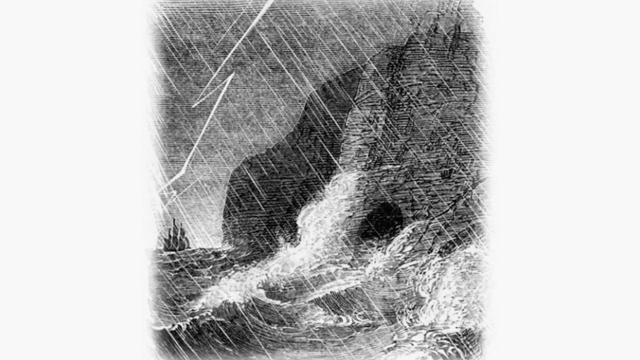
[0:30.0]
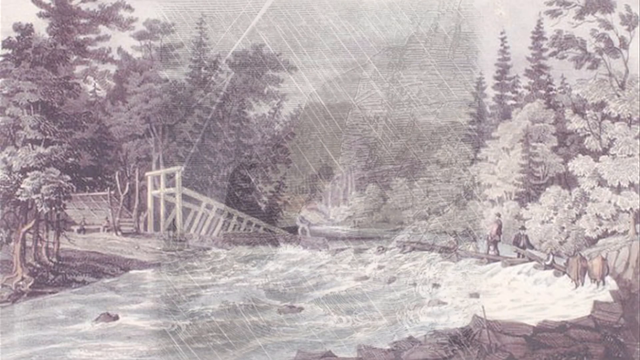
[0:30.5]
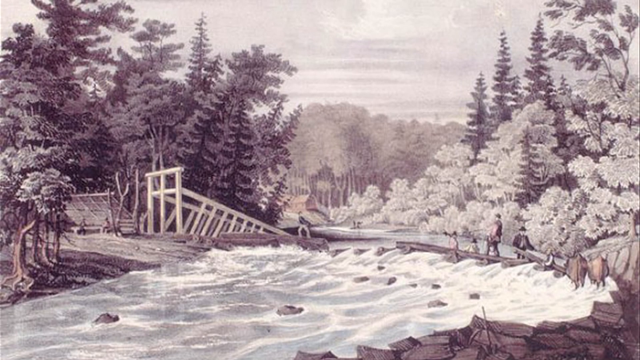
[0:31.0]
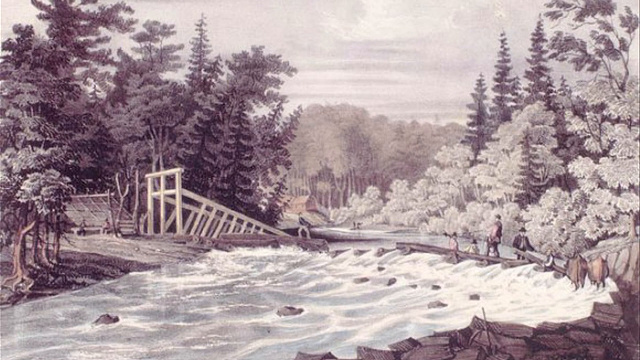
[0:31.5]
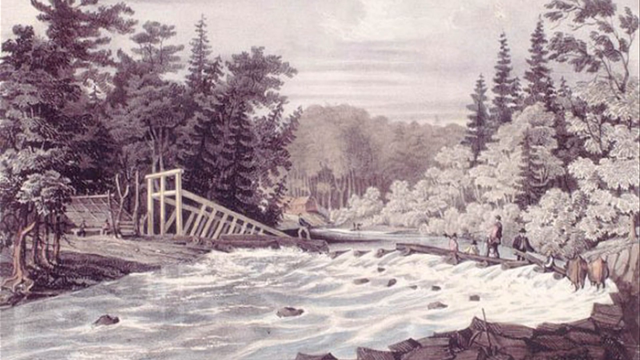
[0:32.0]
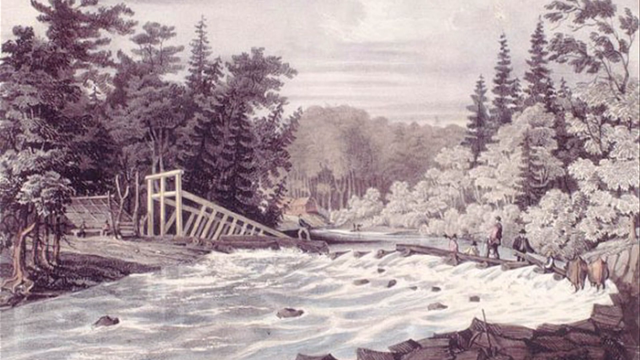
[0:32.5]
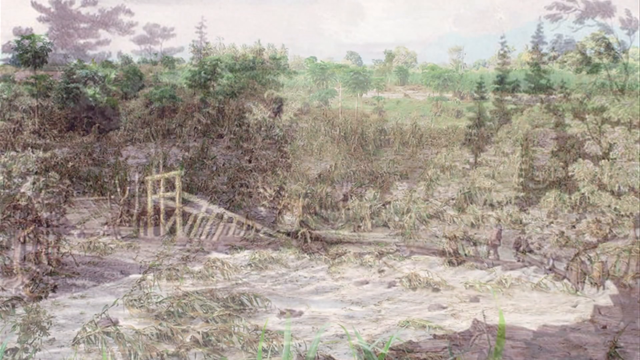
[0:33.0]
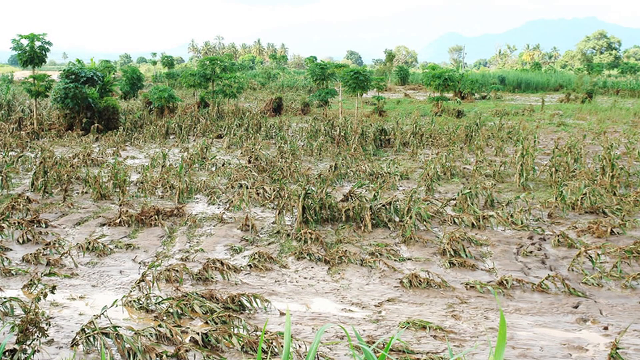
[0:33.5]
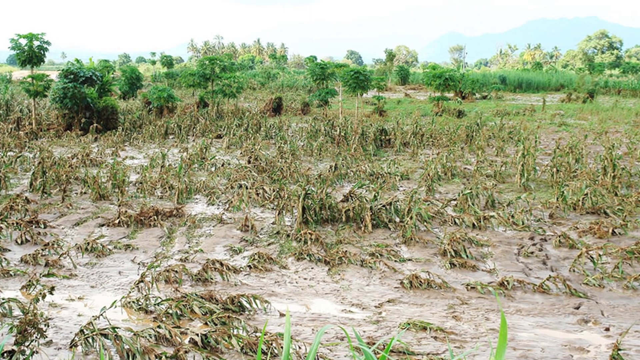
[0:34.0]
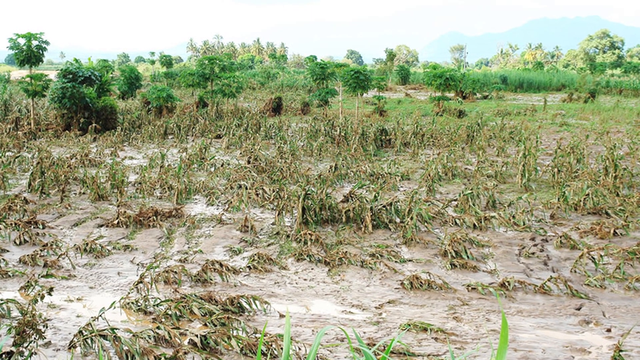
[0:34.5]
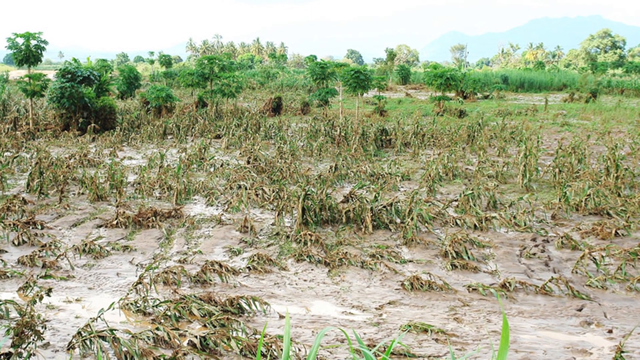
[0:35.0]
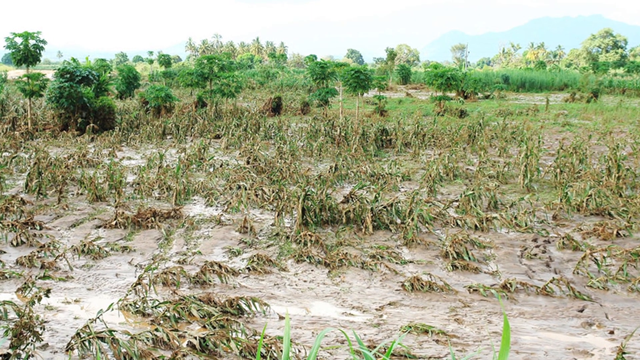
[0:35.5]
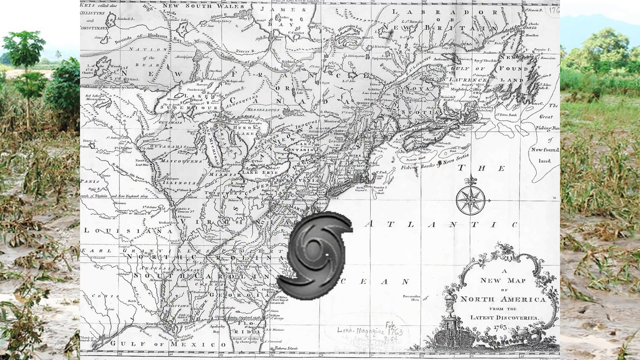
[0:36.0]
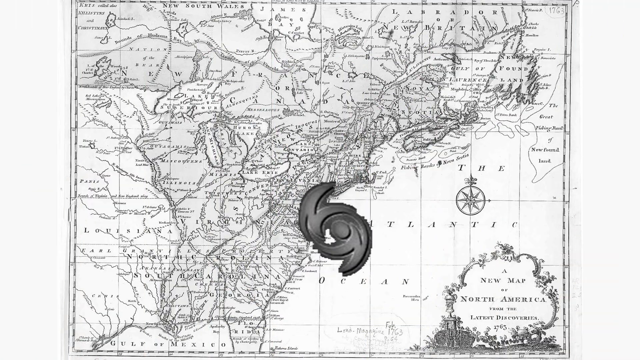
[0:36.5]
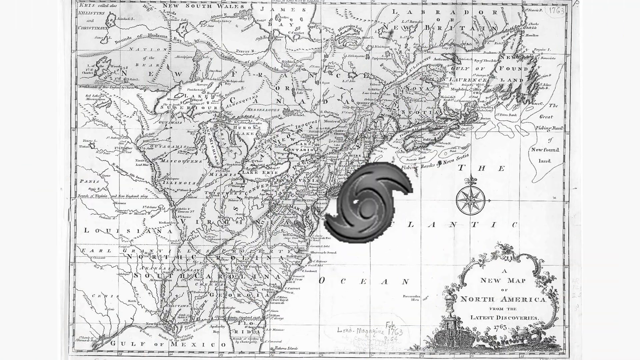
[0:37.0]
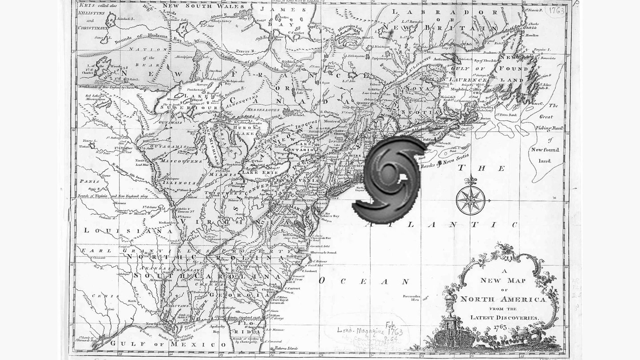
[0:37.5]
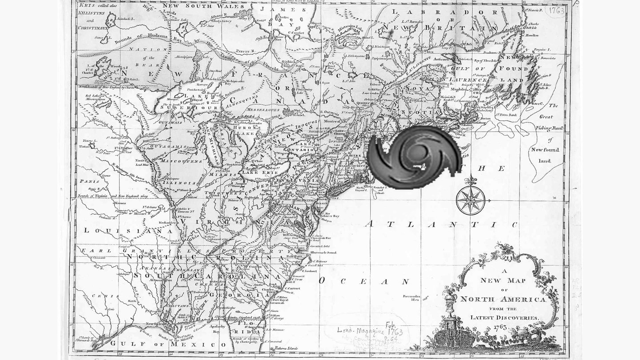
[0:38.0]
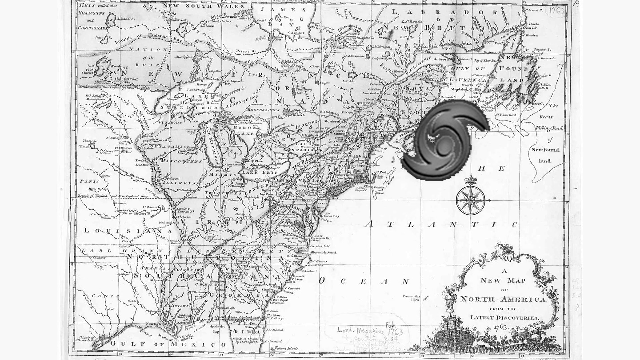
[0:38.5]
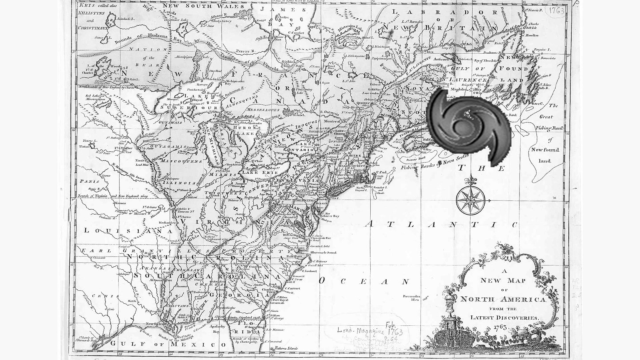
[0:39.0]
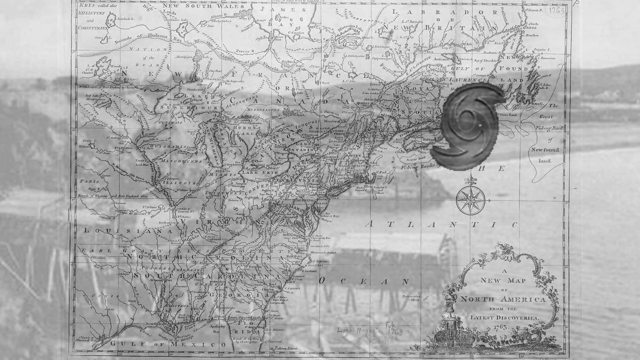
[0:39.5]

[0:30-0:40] The drawing of cliffs being crashed by waves shows a cave. The video then flashes very quickly to another painted scene of apparent devastation, looking like something has been flooded, almost like a rice paddy, with a lot of leaves scattered about; in the background there seem to be whole trees, very green. A mountain is visible very far off in the right background, though the lighting is almost washed out at the back. The video then zooms to a map labeled as the new map of North America, a very old map of the Atlantic, on which a hurricane symbol swirls its way up the eastern coast. It ends with a very quick shot of a ship crashing.